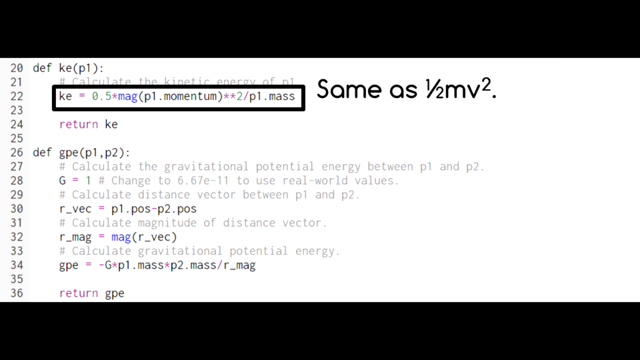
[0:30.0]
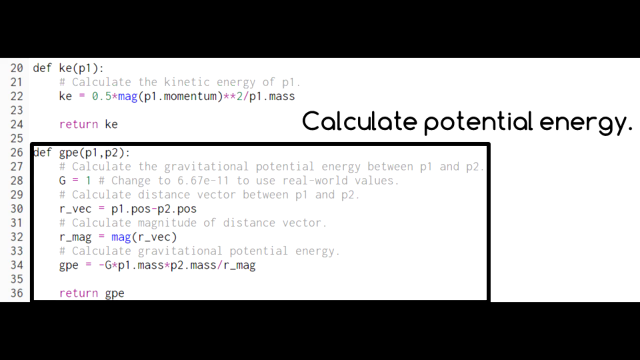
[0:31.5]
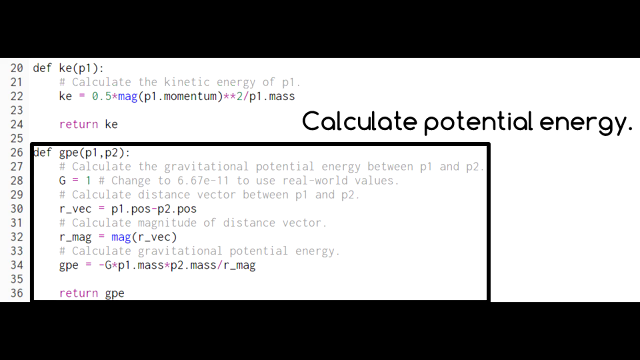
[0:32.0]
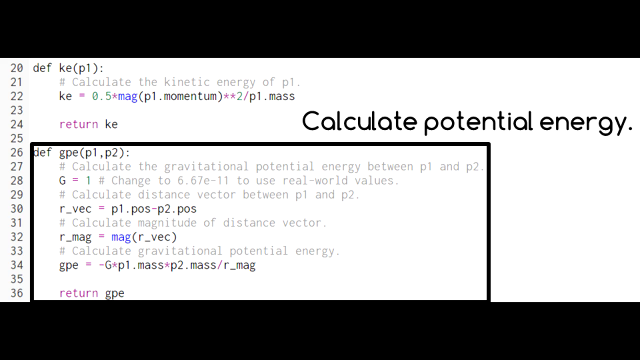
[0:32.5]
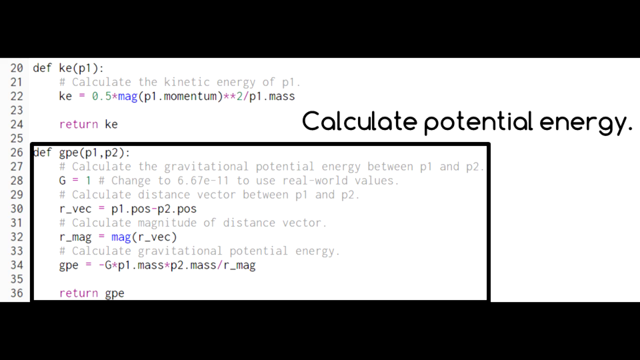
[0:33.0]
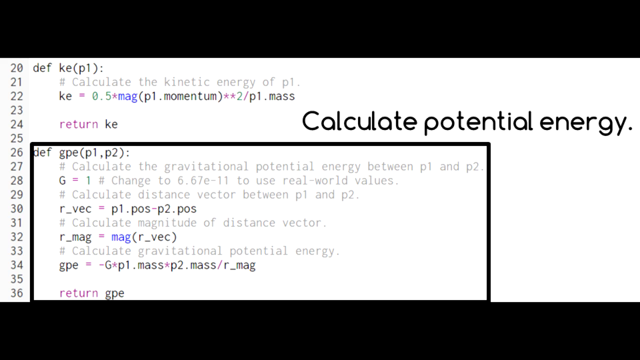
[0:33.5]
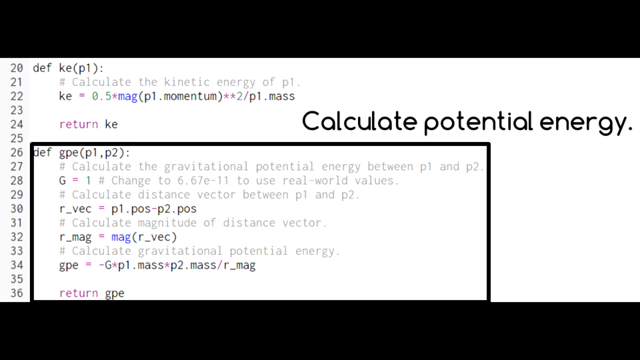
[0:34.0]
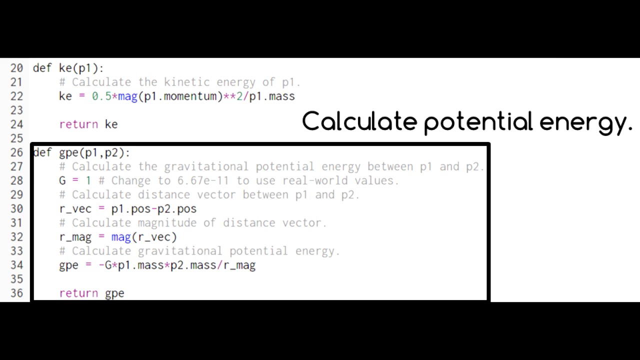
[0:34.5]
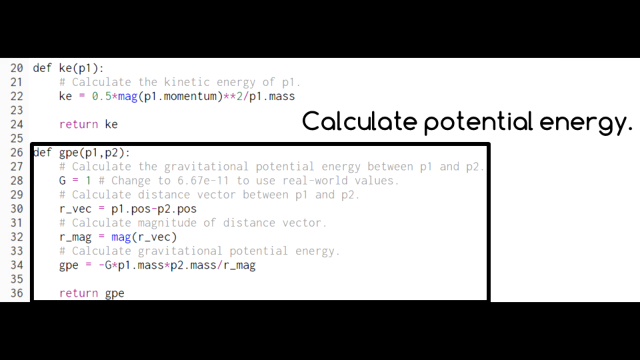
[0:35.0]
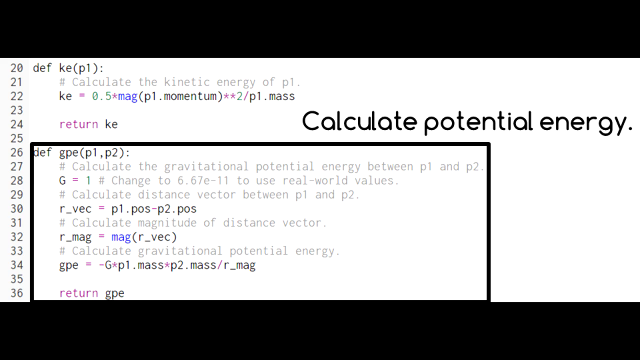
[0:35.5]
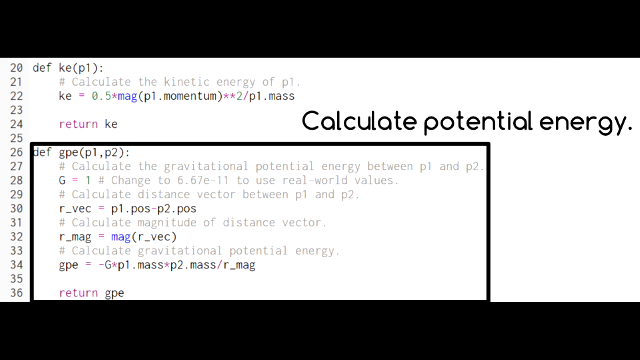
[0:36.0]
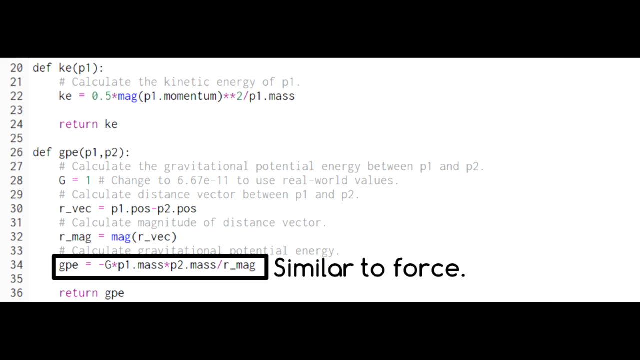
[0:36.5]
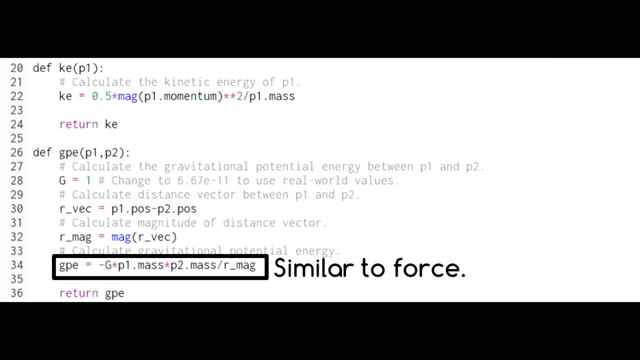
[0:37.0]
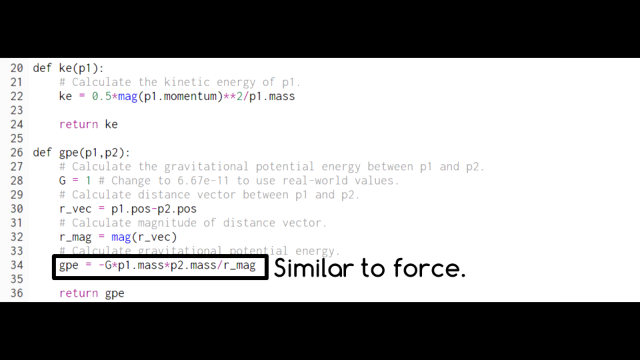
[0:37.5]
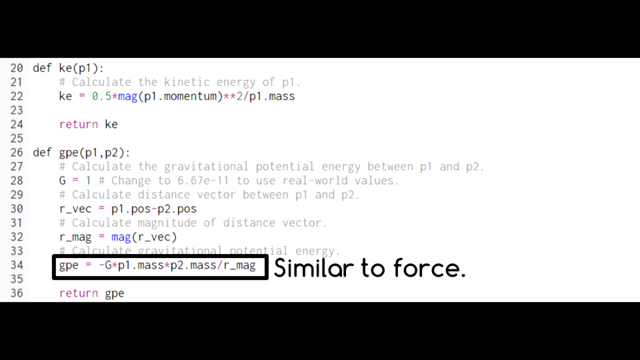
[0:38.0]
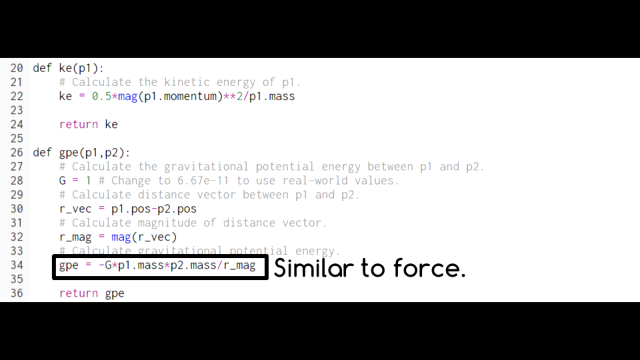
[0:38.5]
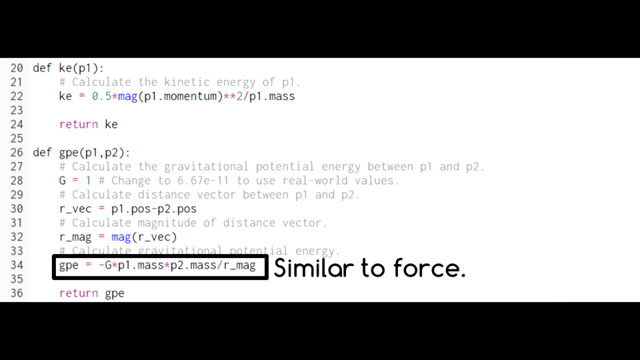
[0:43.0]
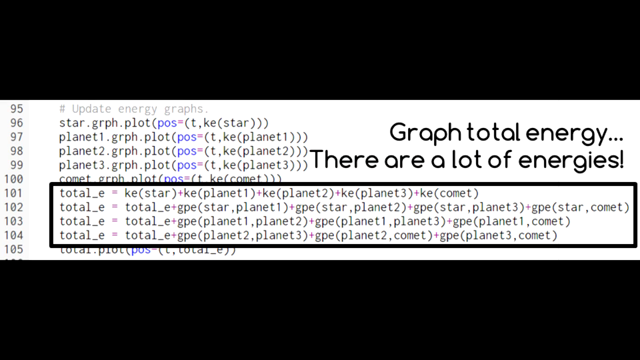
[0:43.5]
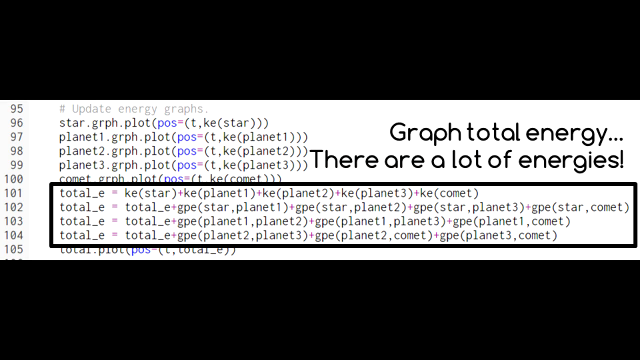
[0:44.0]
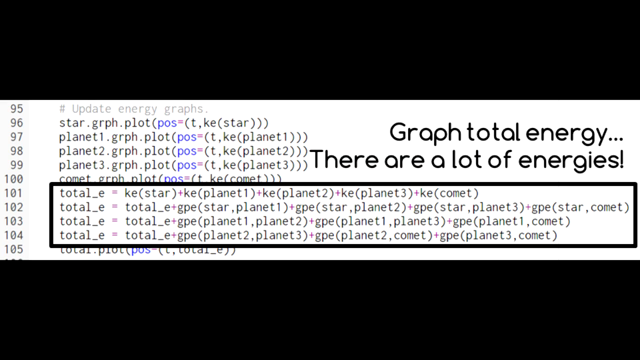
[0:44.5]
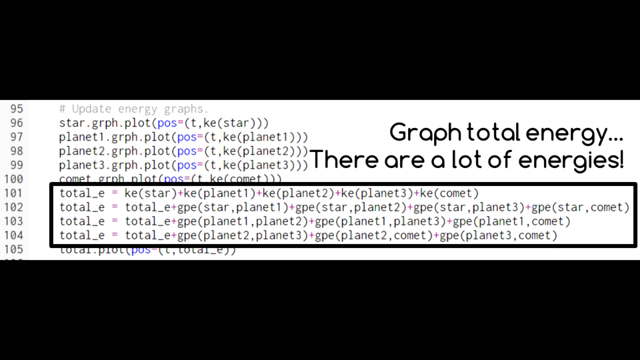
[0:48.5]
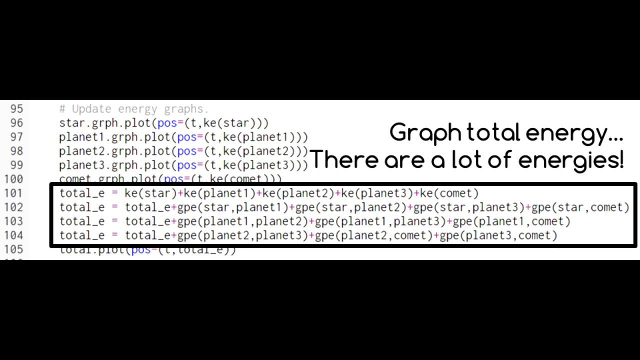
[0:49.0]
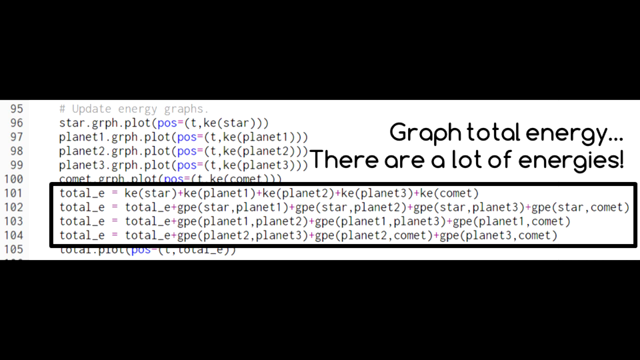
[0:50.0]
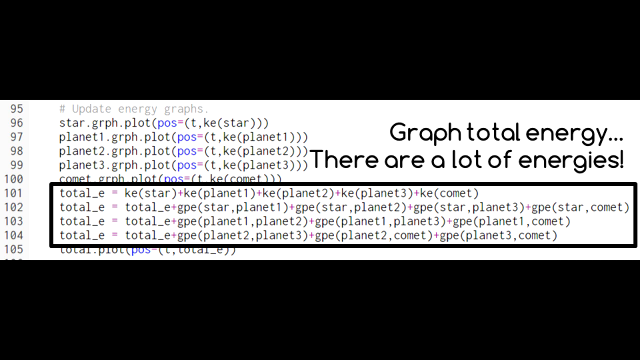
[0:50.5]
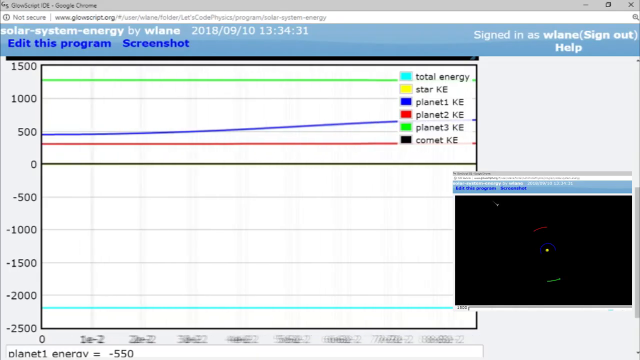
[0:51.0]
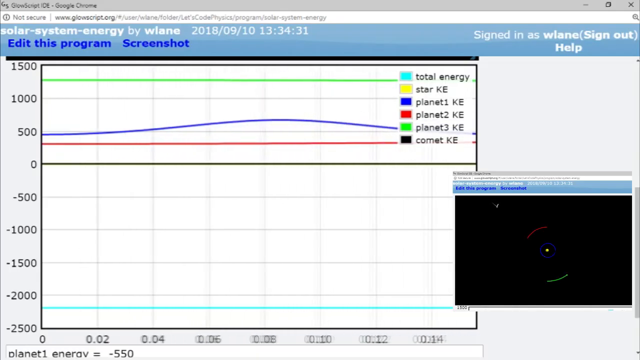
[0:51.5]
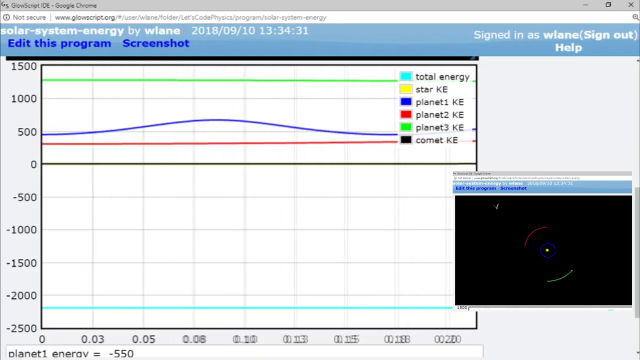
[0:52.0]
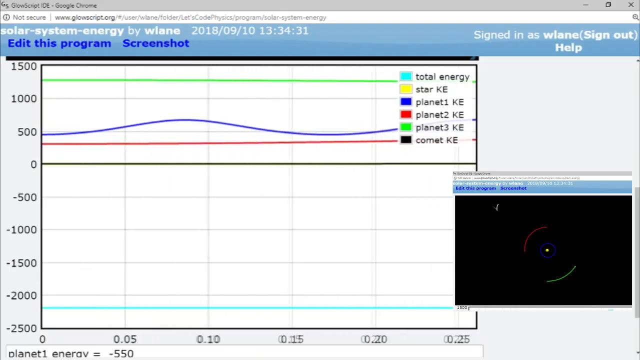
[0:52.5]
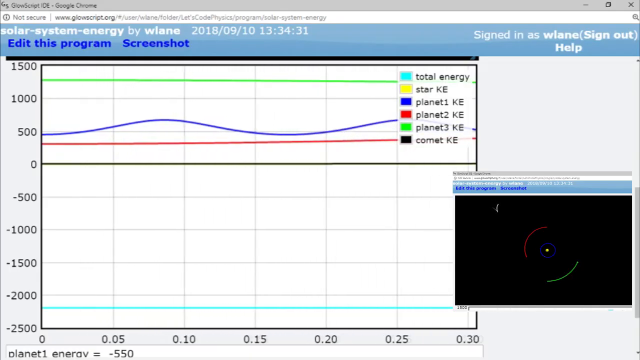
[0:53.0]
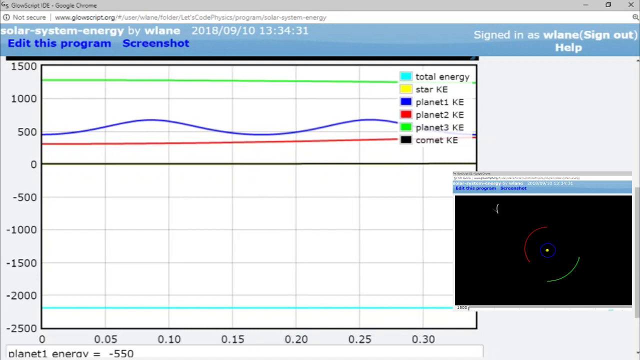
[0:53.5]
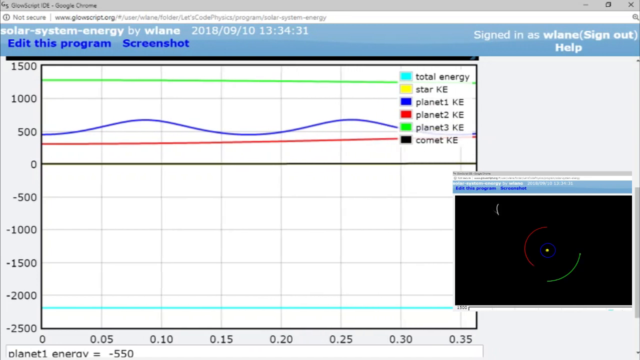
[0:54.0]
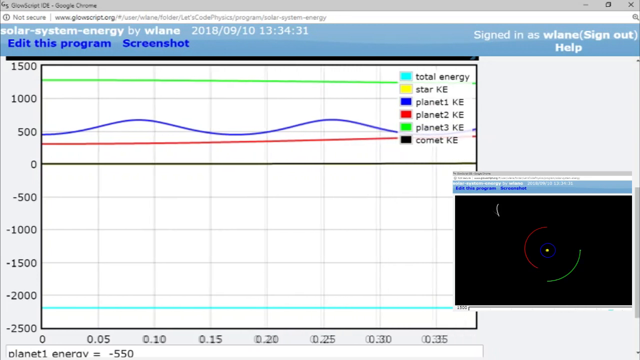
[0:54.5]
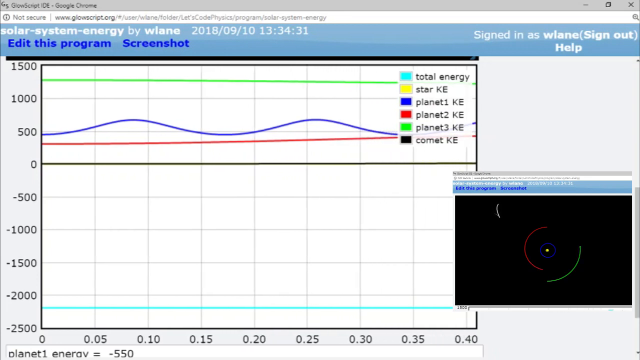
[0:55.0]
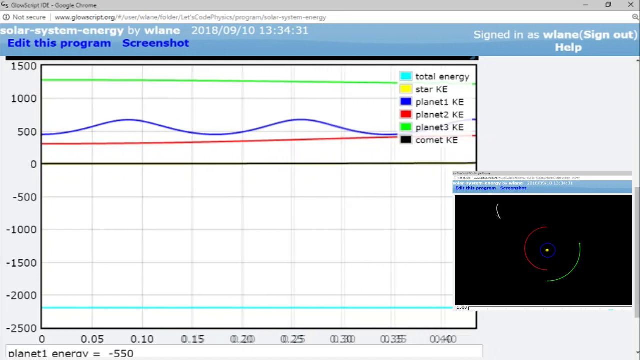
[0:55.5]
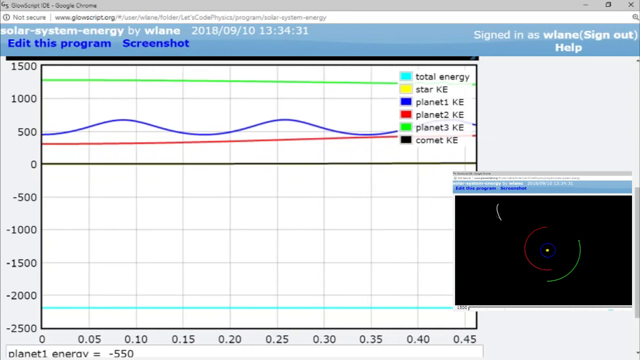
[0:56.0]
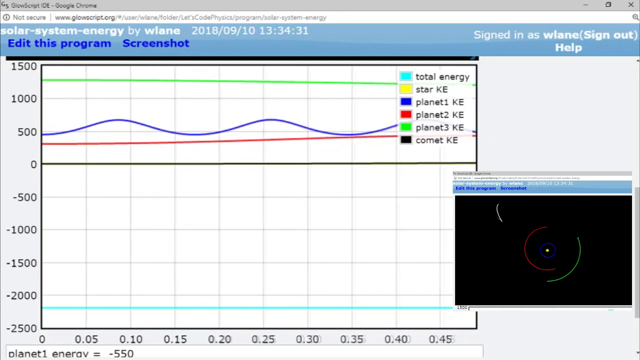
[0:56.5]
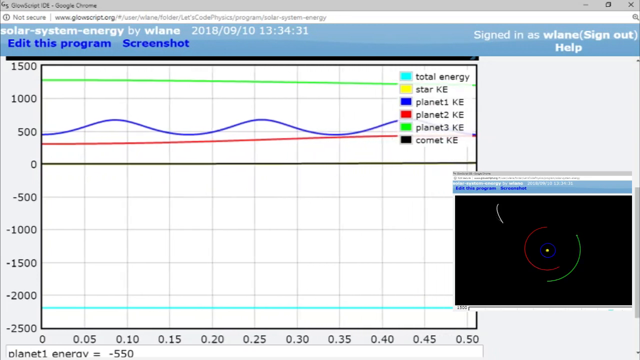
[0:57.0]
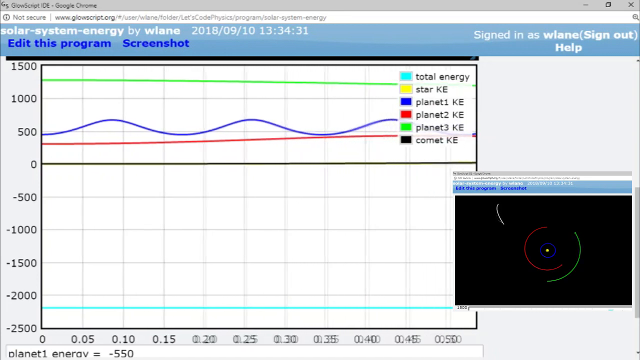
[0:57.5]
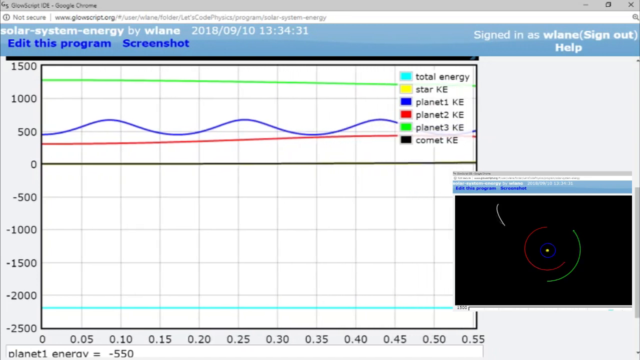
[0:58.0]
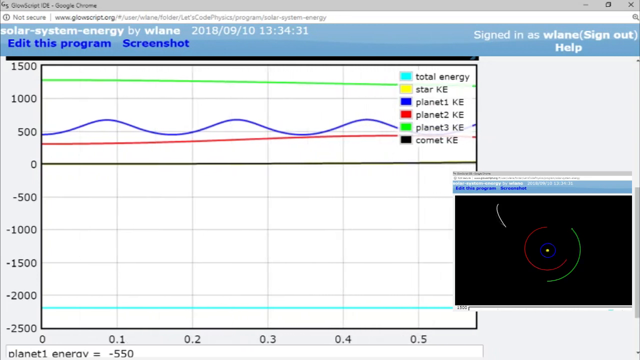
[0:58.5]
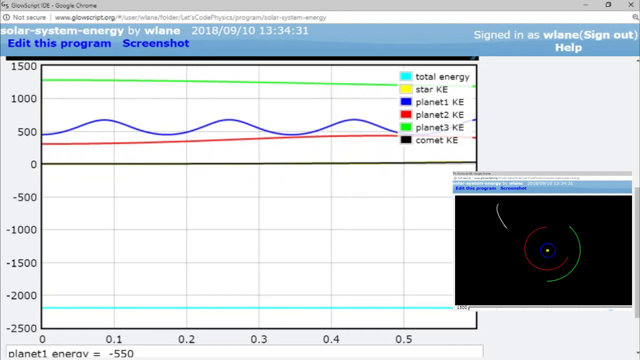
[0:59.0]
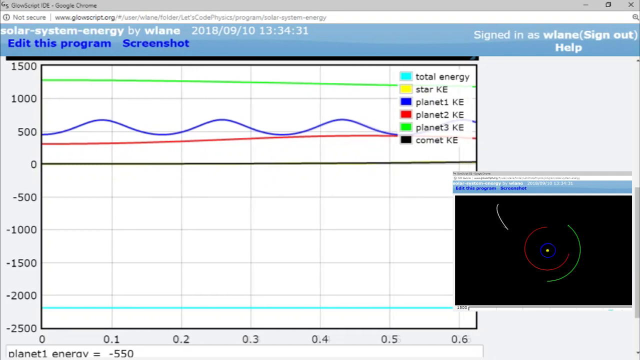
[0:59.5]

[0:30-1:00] What looks like an equation appears with the text "calculate potential energy", and the steps for calculating potential energy are shown while a person explains. Code lists planet 1, planet 2 and planet 3, then total energy 1, 2, 3 and a total energy, with calculations between planet 1, planet 2, planet 3 and the star in a long list. A graph follows, with text including "edit this program". The graph's indicators read total energy, star kinetic energy and several kinetic energy entries, and the graph is moving.